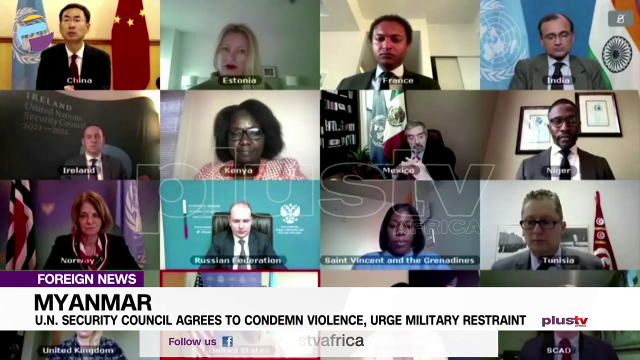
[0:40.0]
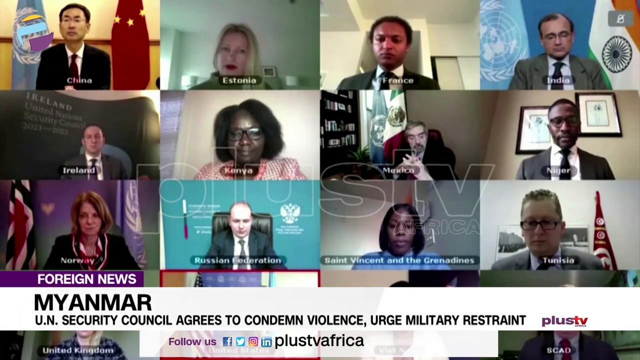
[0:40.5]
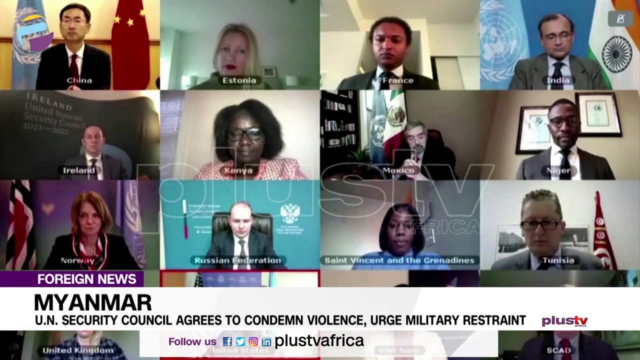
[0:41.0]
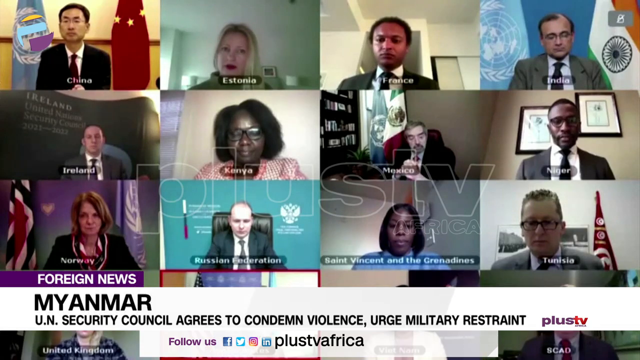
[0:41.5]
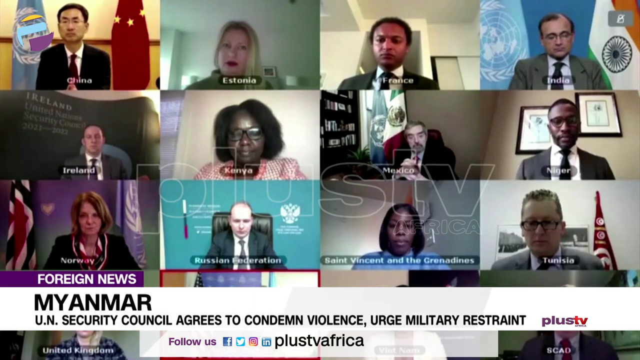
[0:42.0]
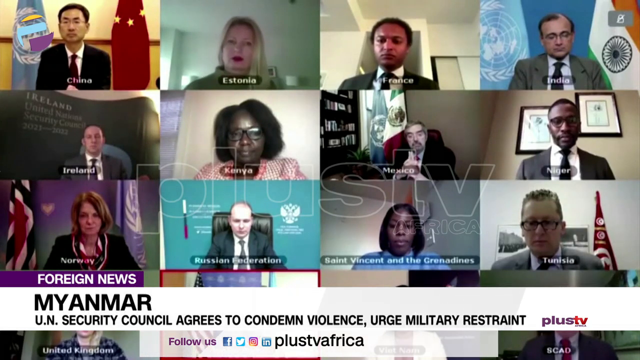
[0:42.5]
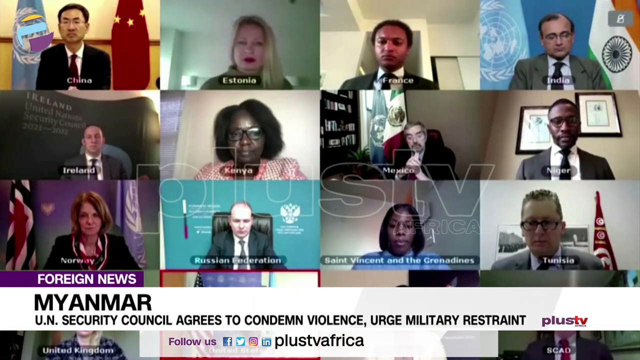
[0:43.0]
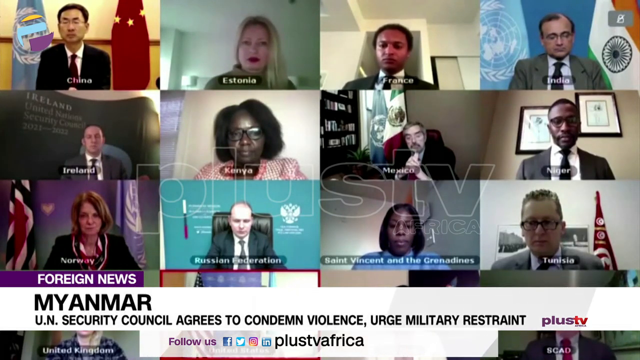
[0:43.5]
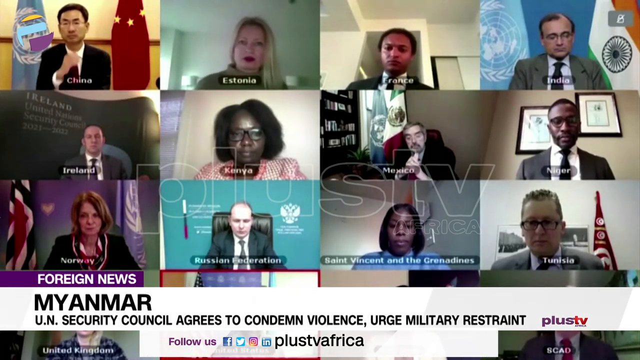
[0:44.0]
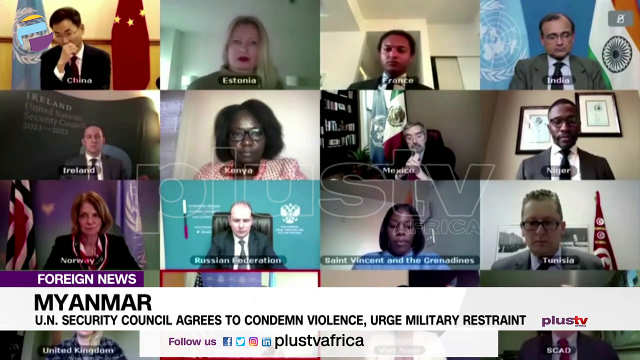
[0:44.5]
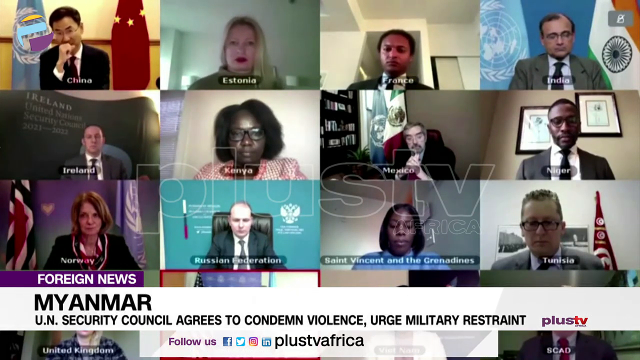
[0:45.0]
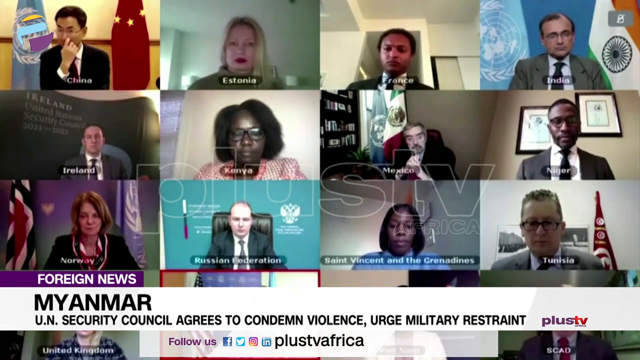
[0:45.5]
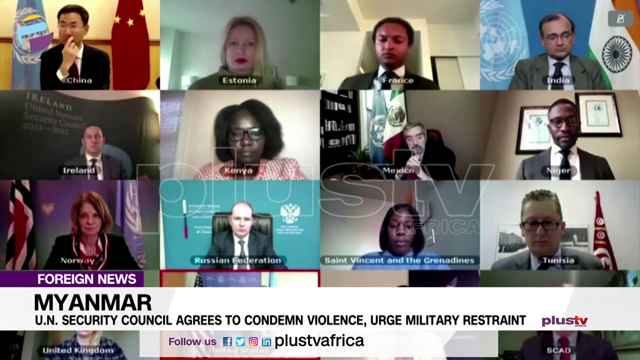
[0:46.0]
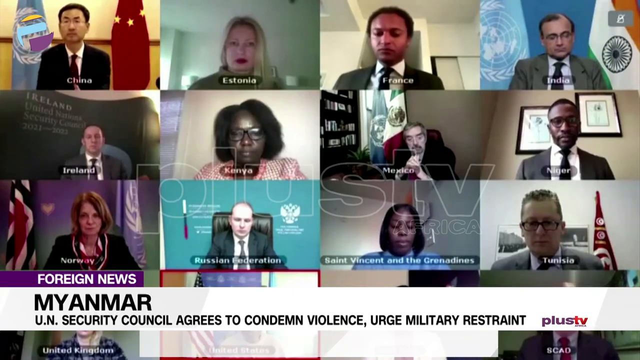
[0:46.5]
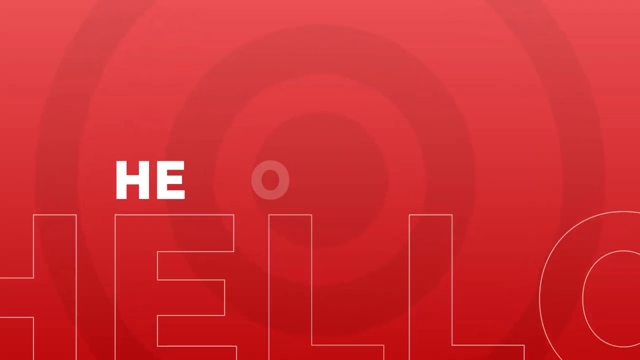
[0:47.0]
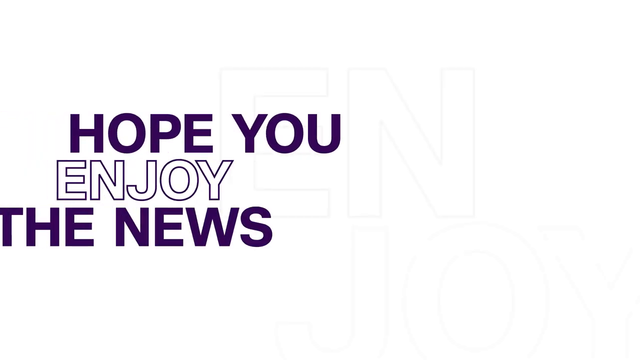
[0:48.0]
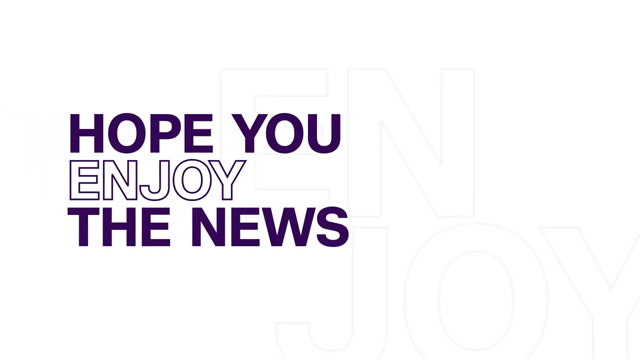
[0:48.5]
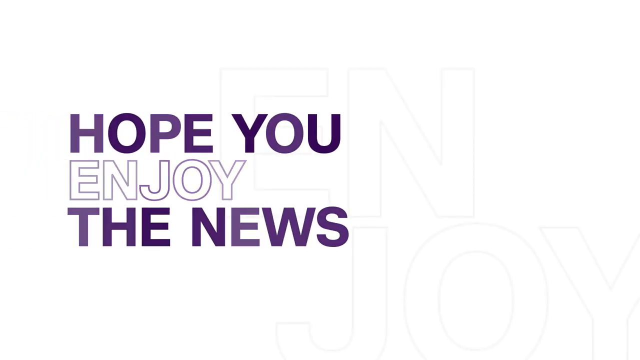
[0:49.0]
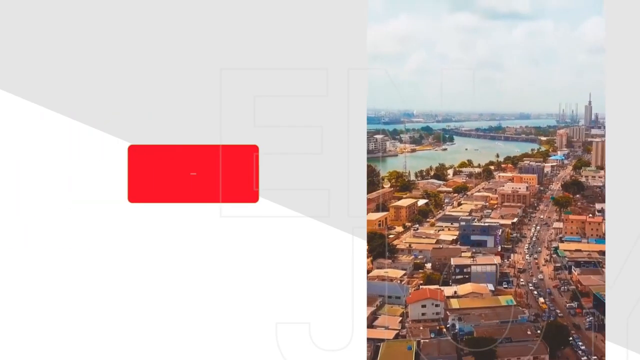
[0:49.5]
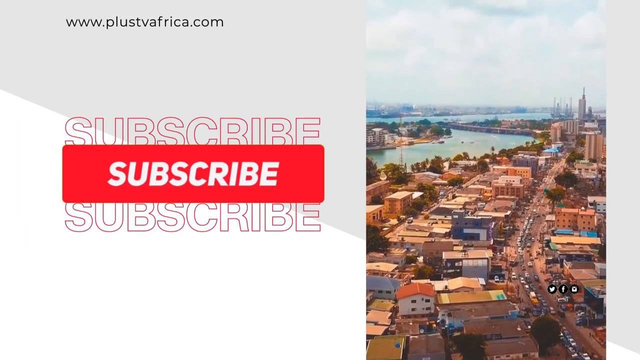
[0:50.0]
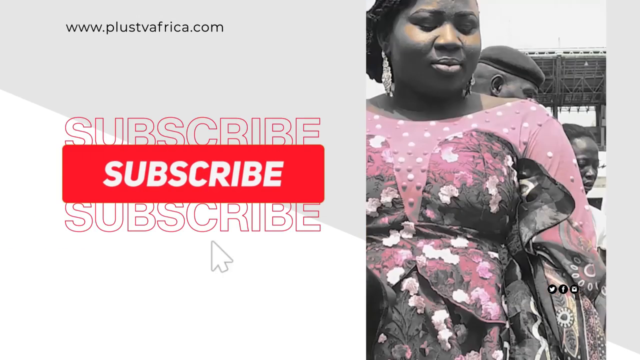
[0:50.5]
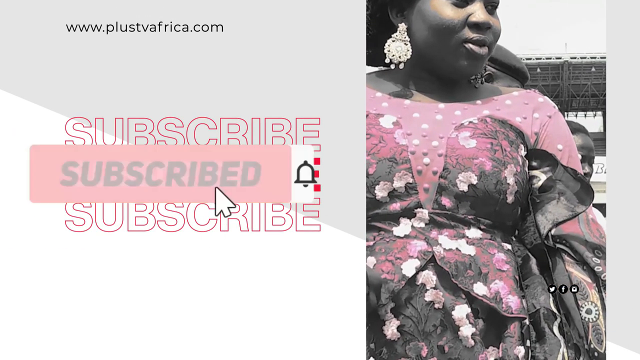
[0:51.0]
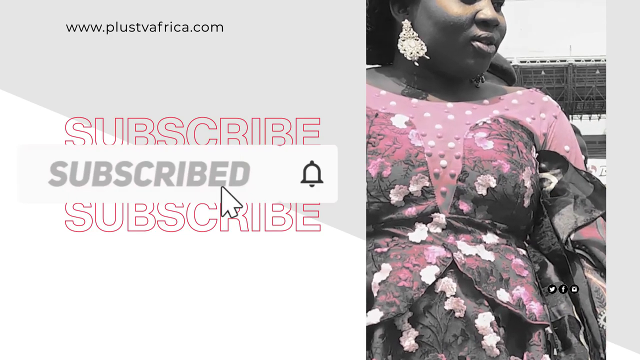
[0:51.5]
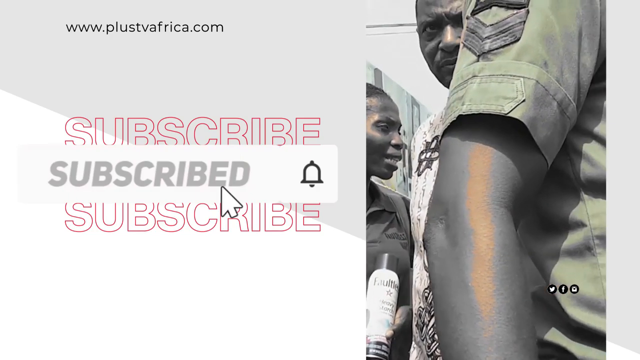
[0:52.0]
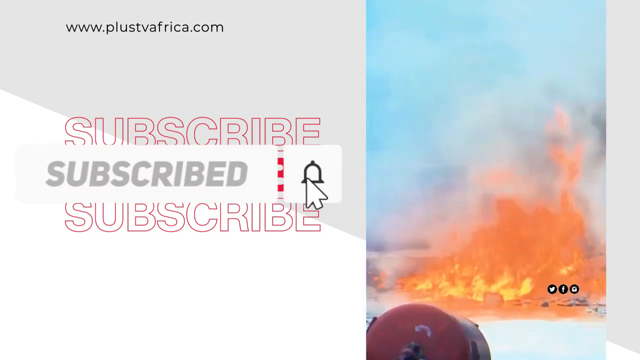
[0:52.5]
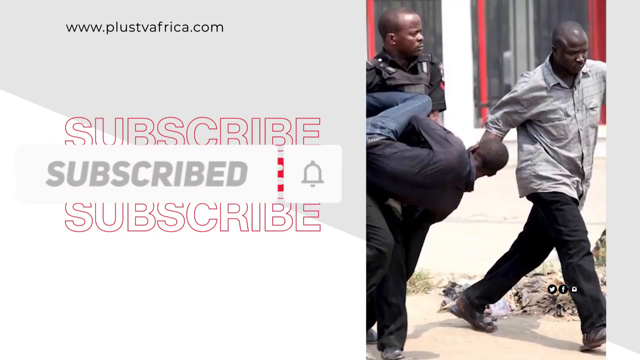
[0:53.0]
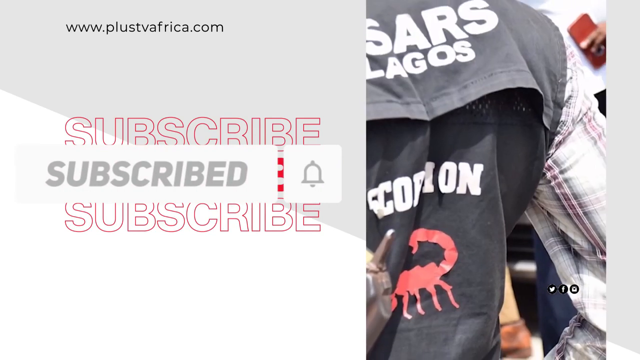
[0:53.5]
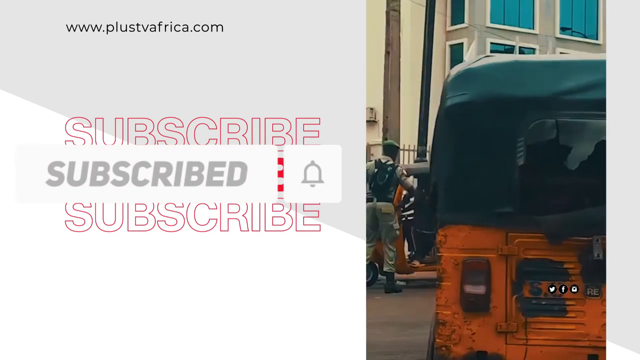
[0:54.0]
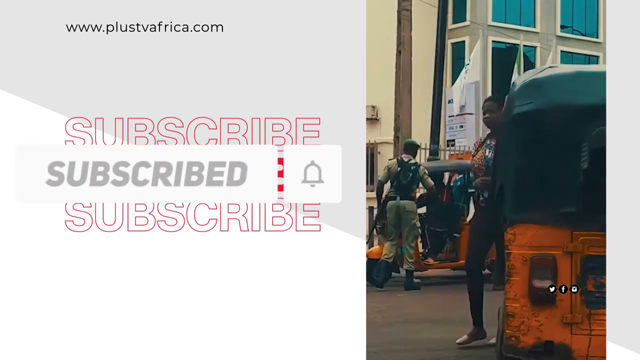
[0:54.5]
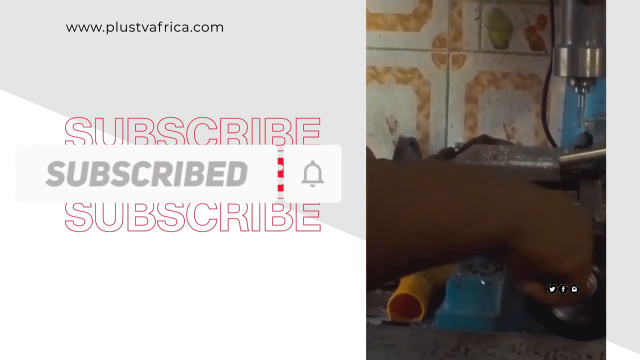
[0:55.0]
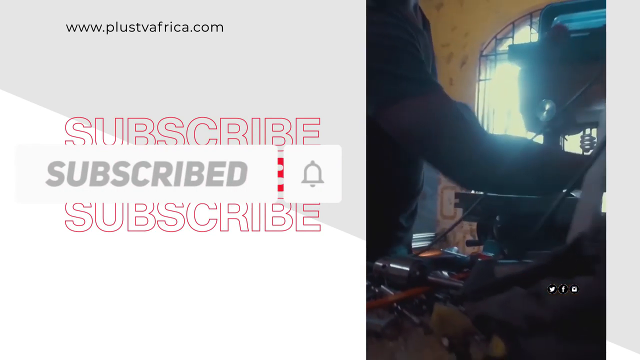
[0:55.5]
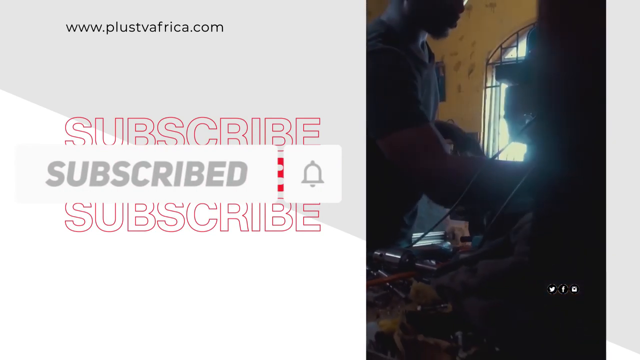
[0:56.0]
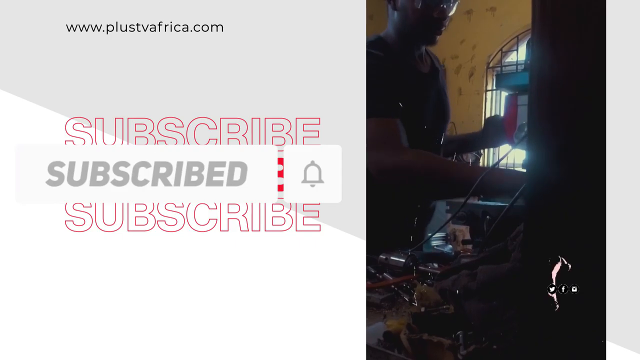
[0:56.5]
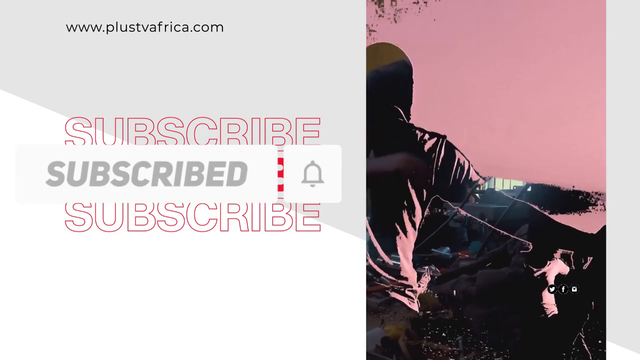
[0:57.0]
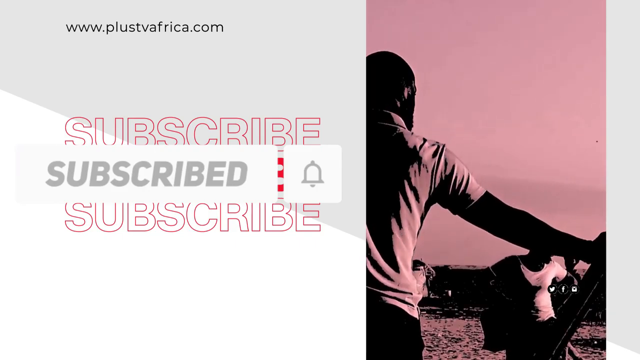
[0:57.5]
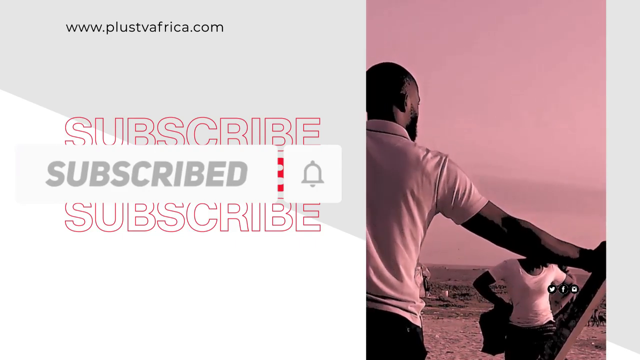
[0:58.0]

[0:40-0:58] The foreign diplomats continue to speak among one another for a few moments until a transition sequence appears: a red background with alternating dark and light red circles, almost like a target, showing two different wordings of "HELLO" in all capital letters. Next, a transition segment on an all-white background reads "hope you enjoy the news"; the words "hope you" and "the news" are in dark purple, while "enjoy" is in white with a purple outline. A final transition segment shows wording on the left-hand side prompting the viewer to subscribe to the channel, with the website "plusTVAfrica.com" at the top. On the right-hand side is a faded color picture of an African American woman wearing a pink floral dress, with the upper half of her head cut off from view.